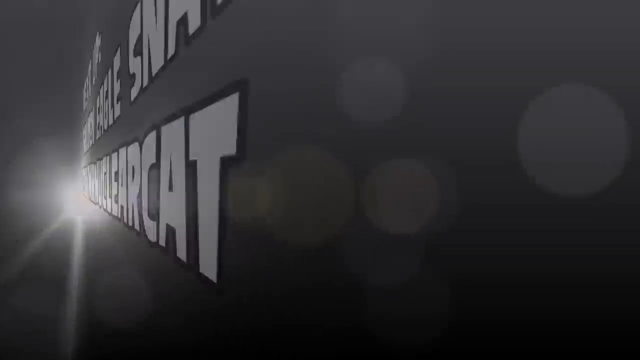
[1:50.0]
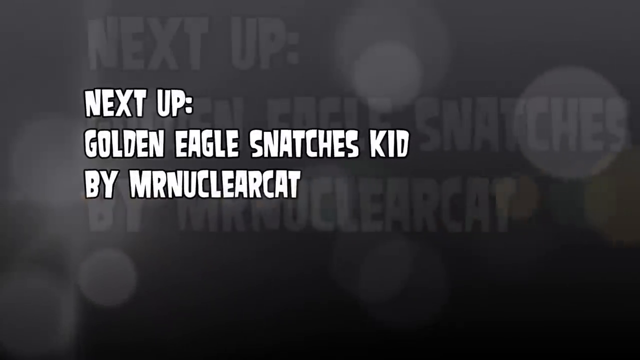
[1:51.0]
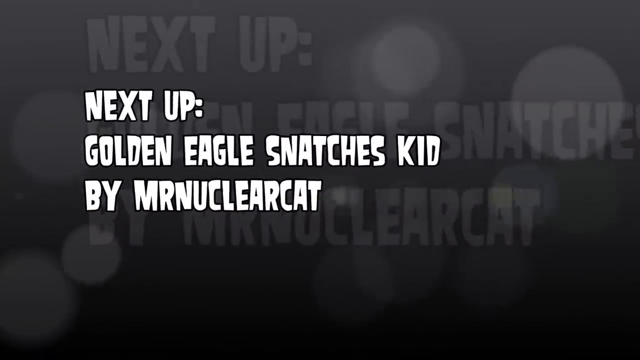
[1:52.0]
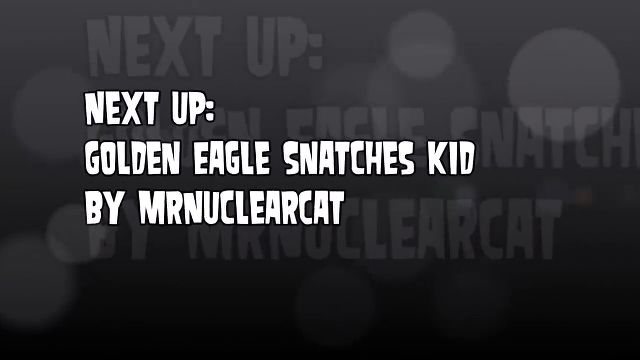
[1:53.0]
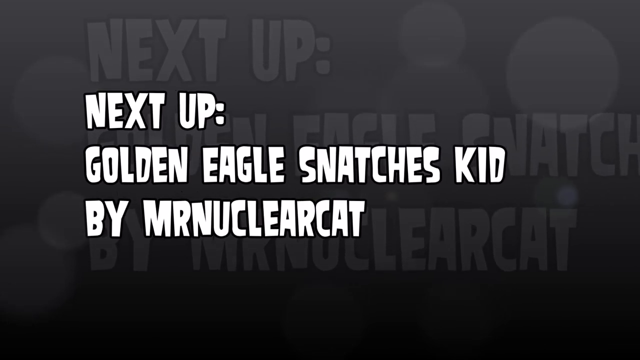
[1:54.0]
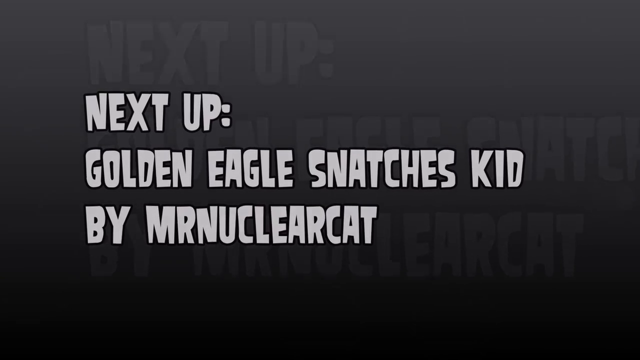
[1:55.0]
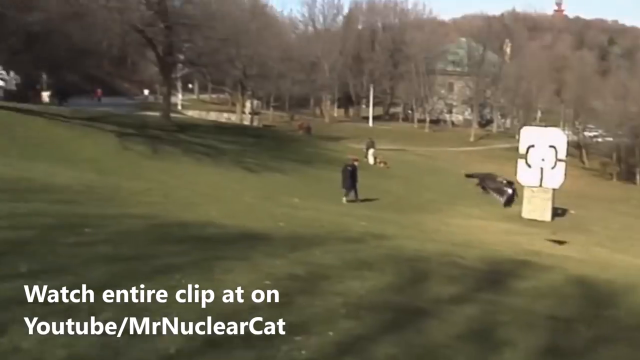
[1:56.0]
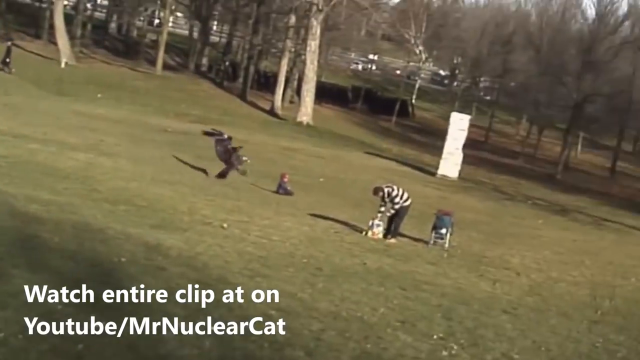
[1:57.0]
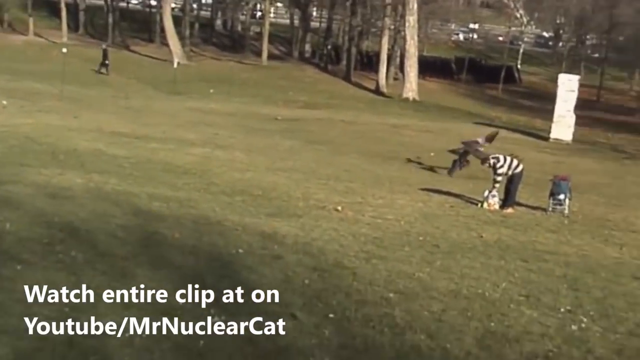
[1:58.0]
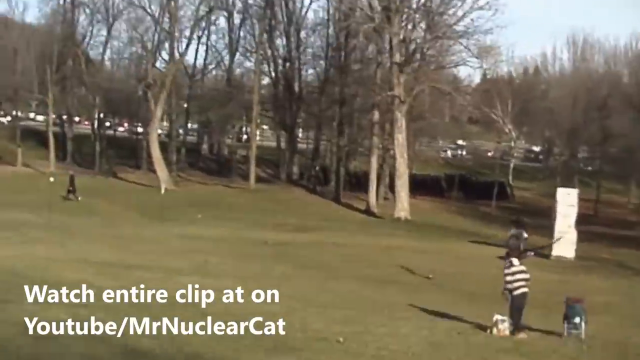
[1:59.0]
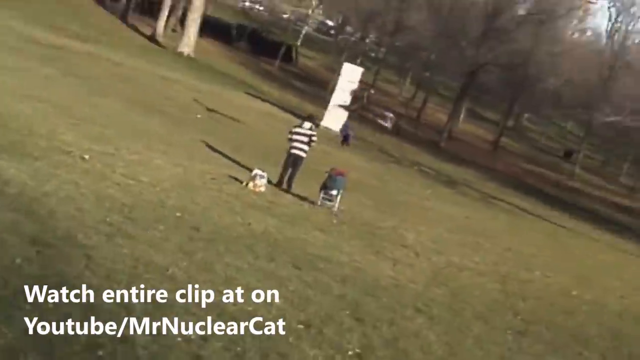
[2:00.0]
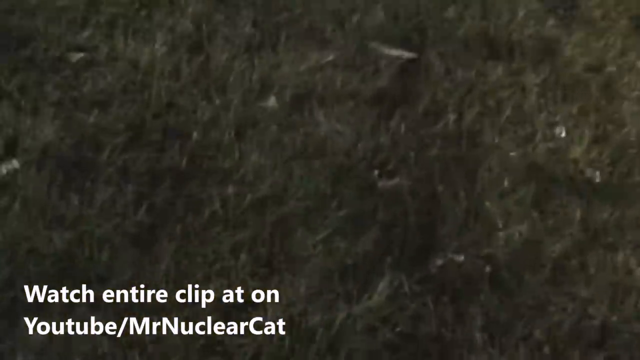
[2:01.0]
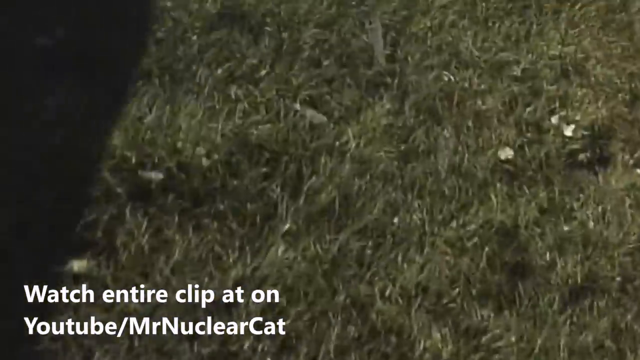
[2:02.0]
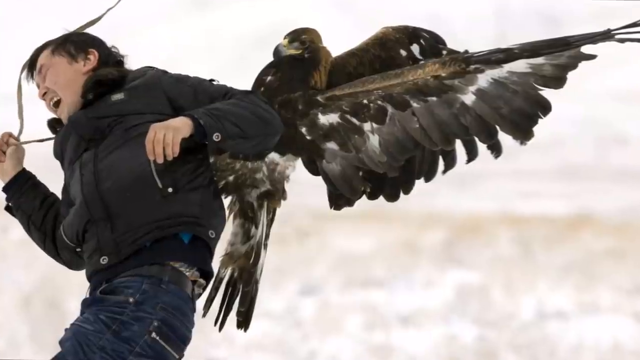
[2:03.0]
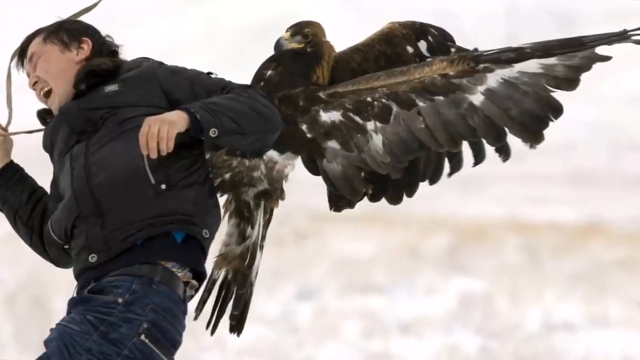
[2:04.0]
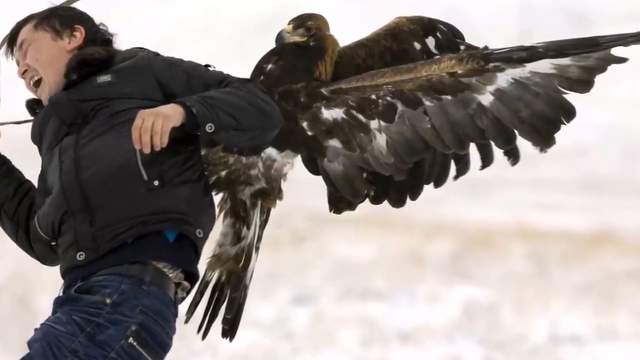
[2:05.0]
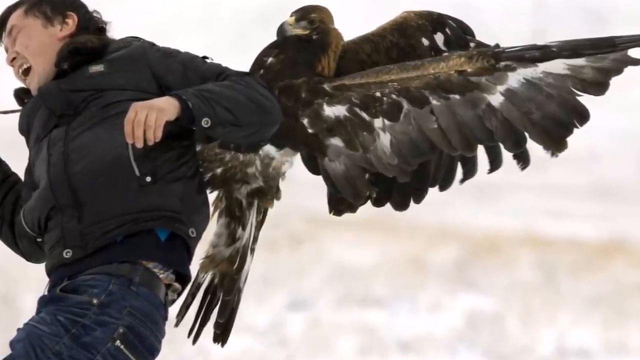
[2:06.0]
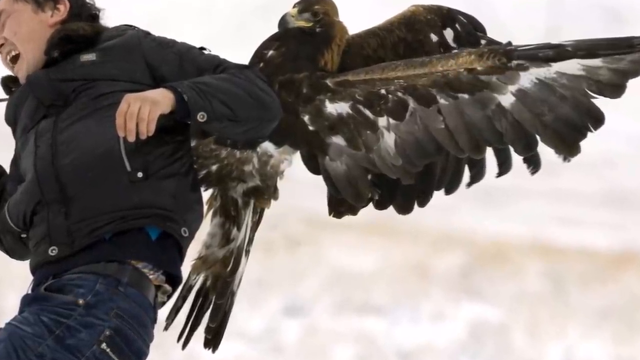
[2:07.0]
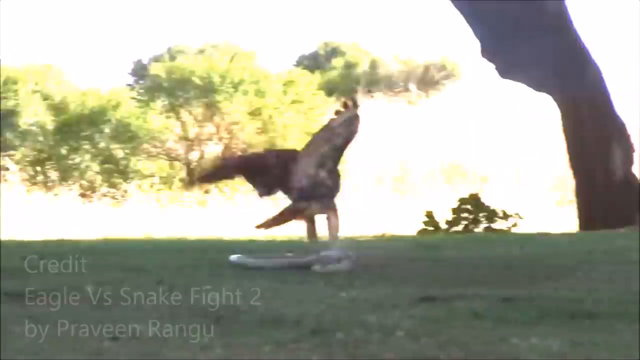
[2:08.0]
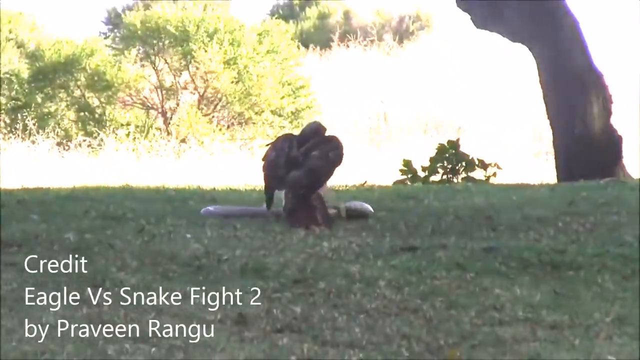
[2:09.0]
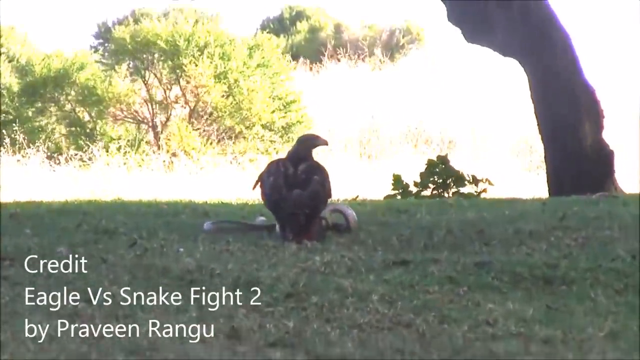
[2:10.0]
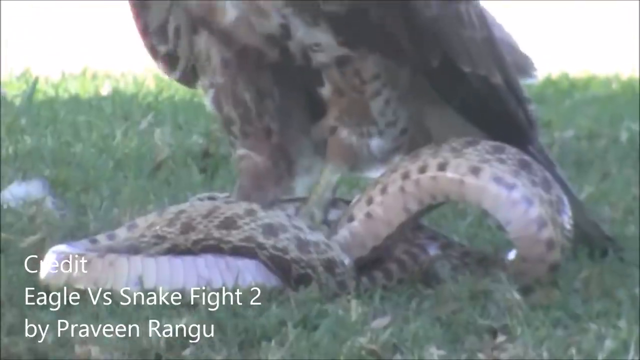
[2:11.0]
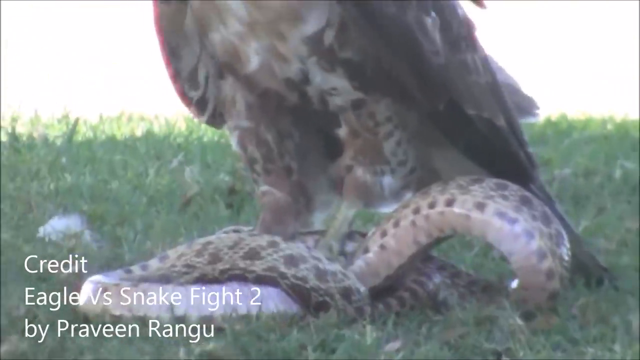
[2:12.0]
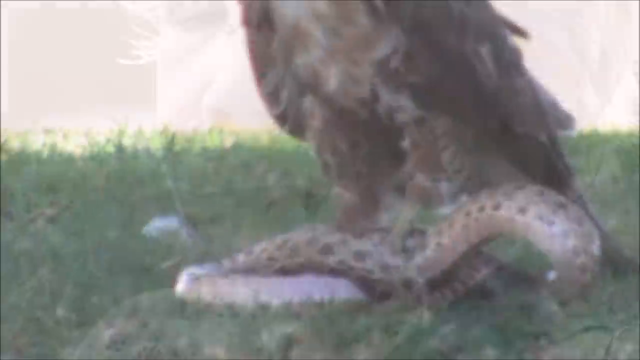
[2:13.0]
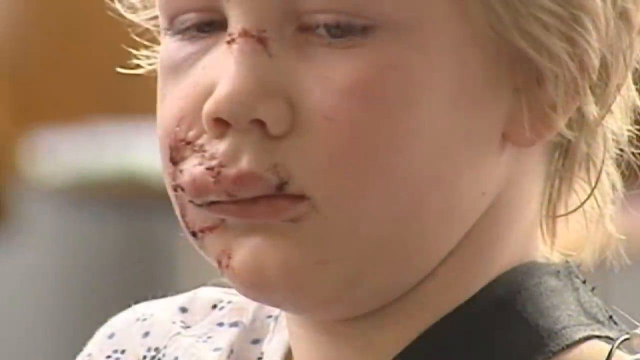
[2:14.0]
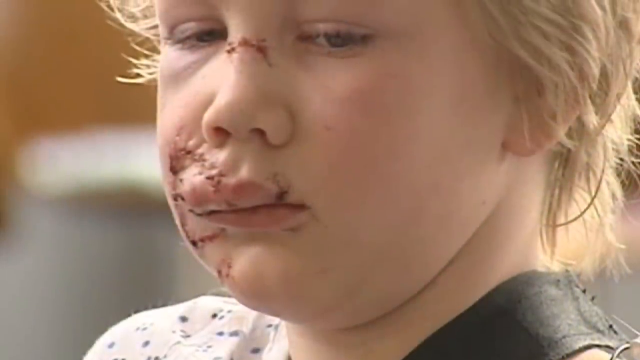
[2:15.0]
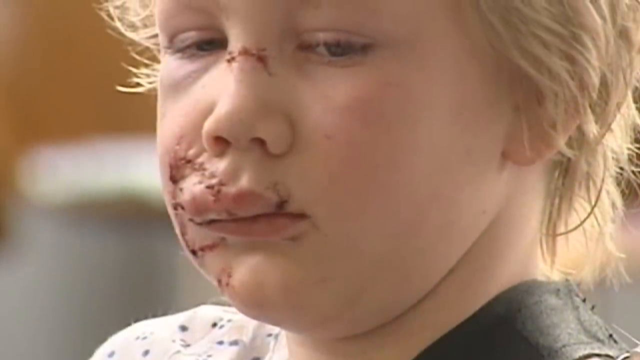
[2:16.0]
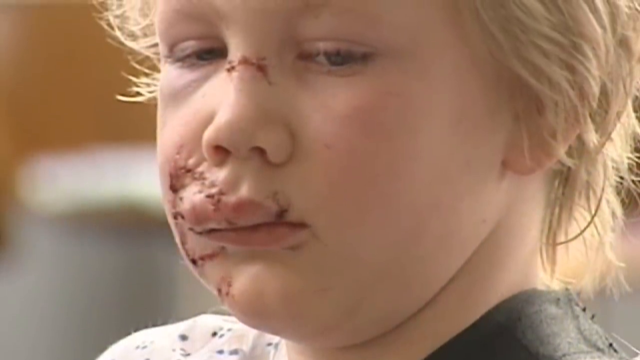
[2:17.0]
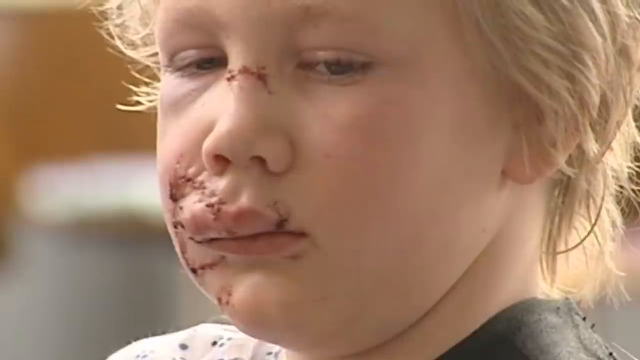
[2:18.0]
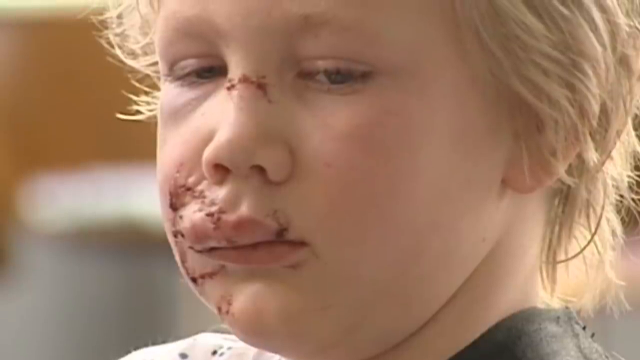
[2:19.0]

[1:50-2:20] After a light spark, words transition in: "Next up, golden eagle snatches kid by Mr. Nuclear React". In the footage, text in the corner reads "watch entire clip at youtube/MrNuclearCat". A very big eagle with gigantic wings spreads them and picks up a kid; the parents run after the kid, and the eagle drops the kid. Another picture shows an eagle swooping onto another man. In the far left corner, text reads "credit, eagle vs snake fight 2 by Praveen Rangu", as a snake and an eagle fight, the snake underneath the eagle and held under its claws. A picture of a girl follows; she has marks, a swollen face and some bruising, and it is unclear whether a snake bit her or an eagle scratched her. A golden eagle then has a deer or a similar small animal in its claws.